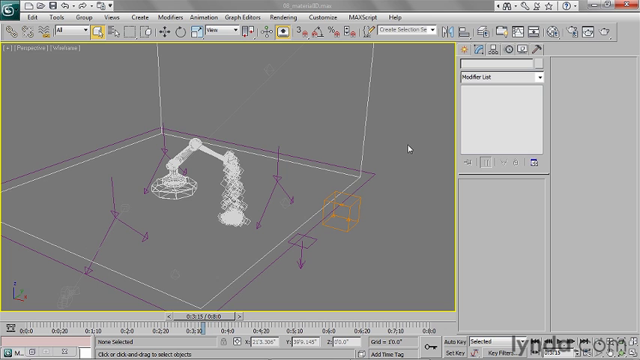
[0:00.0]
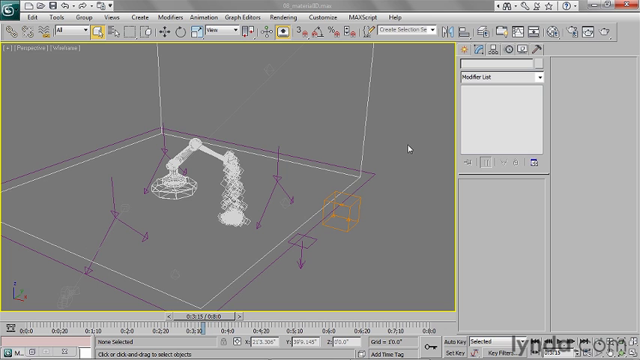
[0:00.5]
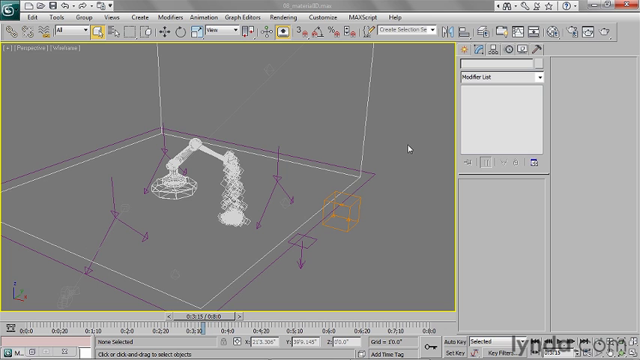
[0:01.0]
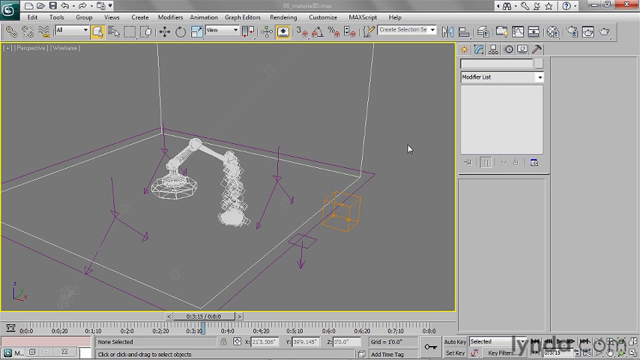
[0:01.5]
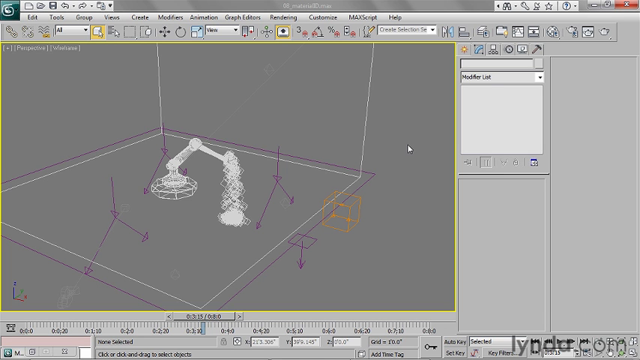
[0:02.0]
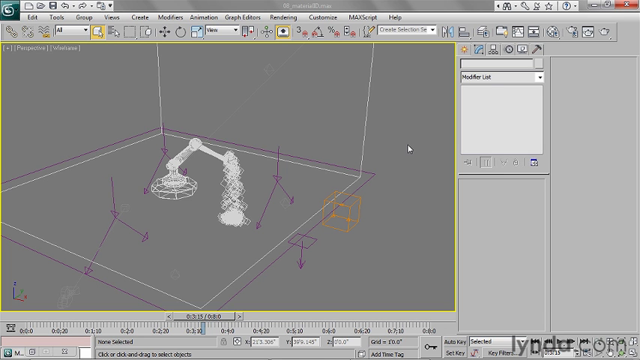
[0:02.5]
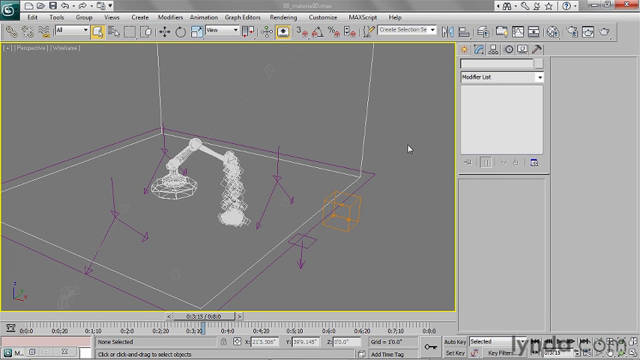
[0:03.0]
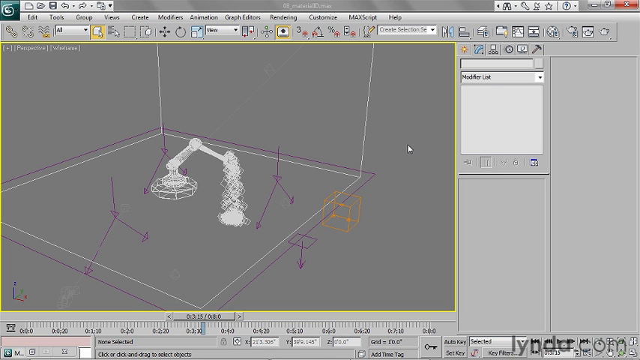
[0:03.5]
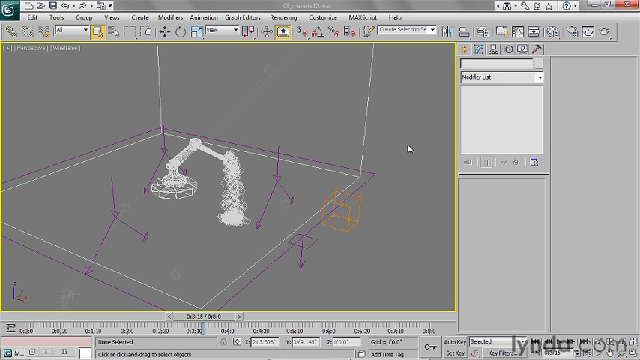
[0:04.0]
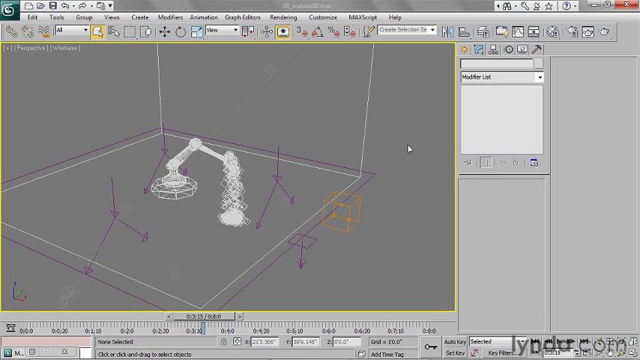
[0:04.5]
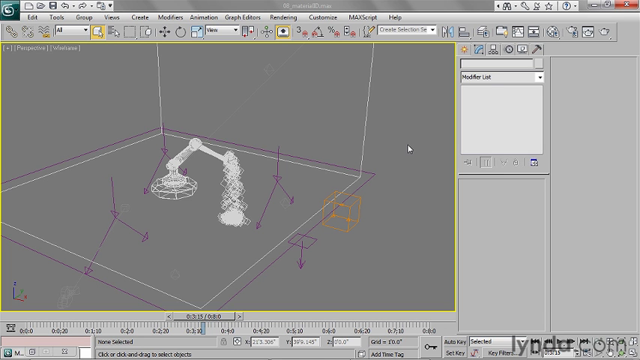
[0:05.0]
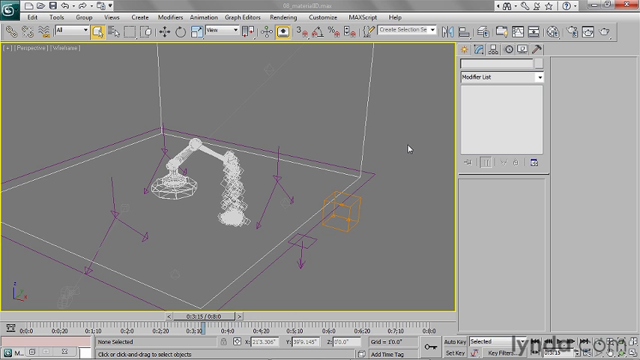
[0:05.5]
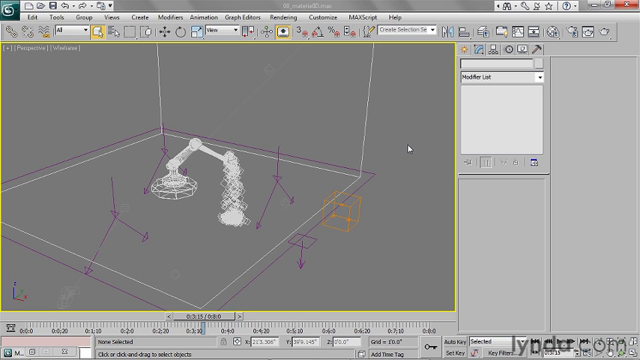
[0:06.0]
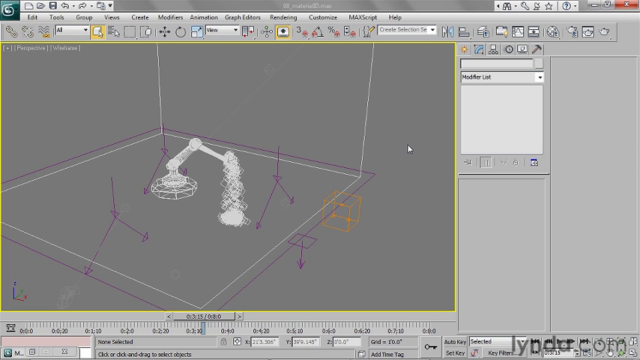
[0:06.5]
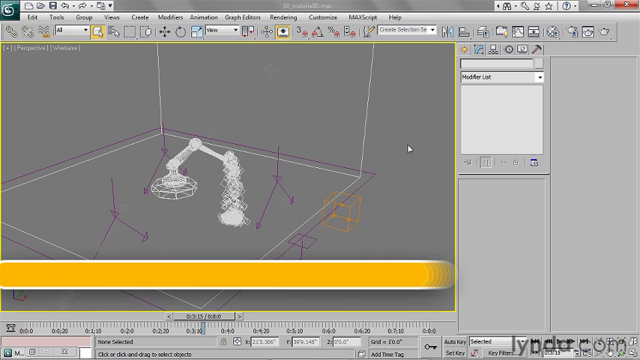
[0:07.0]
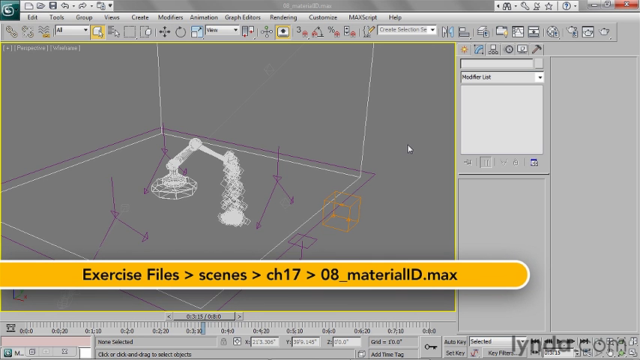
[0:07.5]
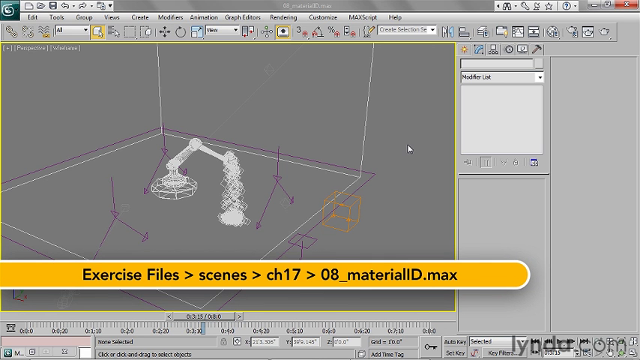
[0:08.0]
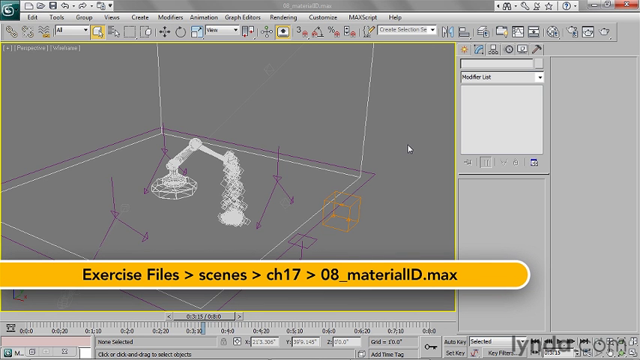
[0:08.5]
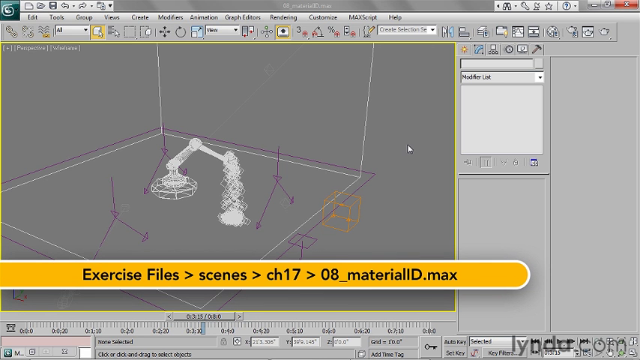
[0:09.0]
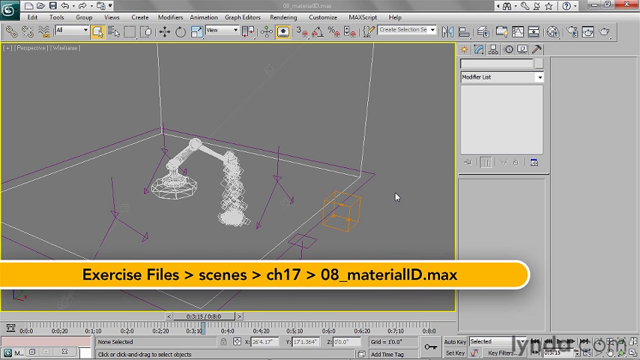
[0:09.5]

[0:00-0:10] The screen looks like it is from a CAD program or a blueprint, with white colors on top. There is white coloring on the flat part of the floor, which is mostly gray. What looks like a white fan is held up by a kind of L-shaped joint, set against a very plain background that shows basically a box. The fan contraption is held with the fan blowing straight down, and there appear to be triangles indicating support to the floor.